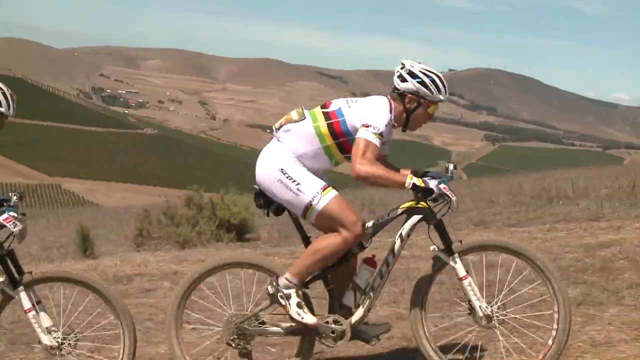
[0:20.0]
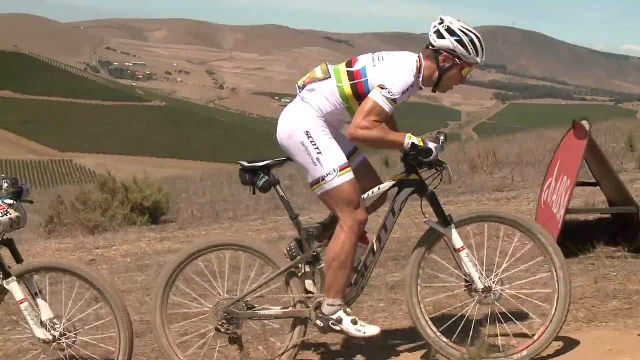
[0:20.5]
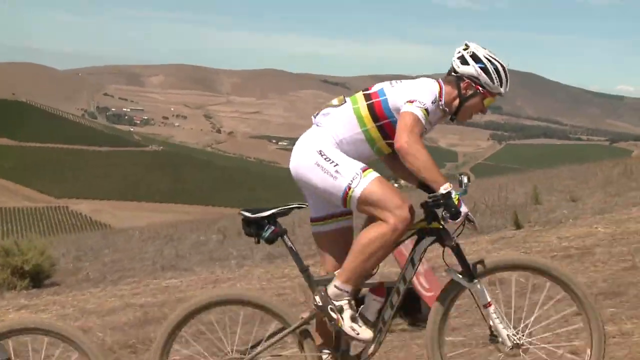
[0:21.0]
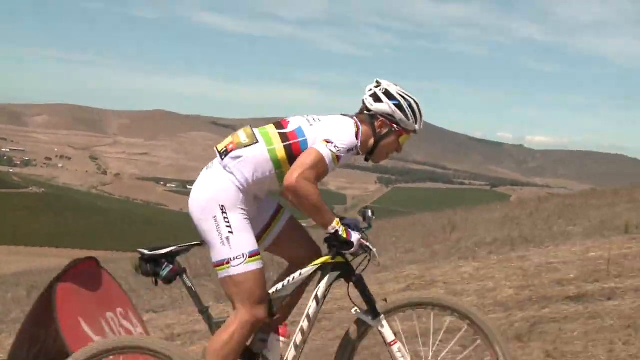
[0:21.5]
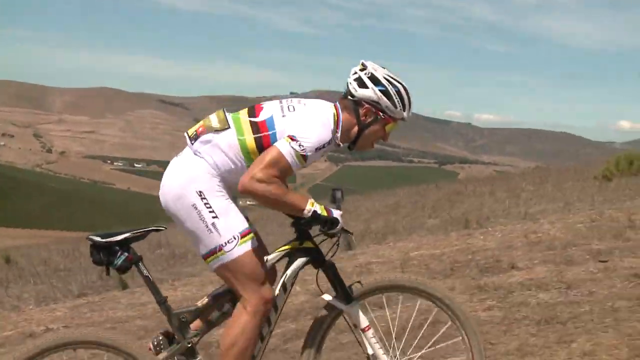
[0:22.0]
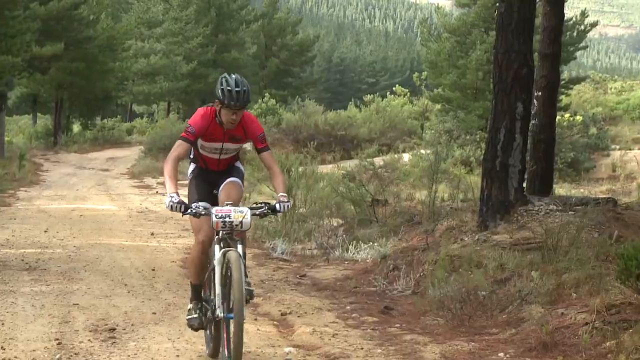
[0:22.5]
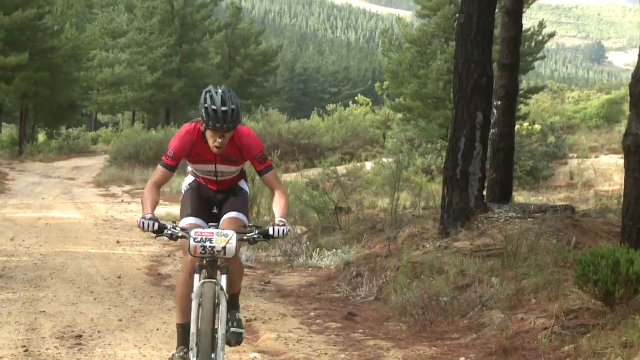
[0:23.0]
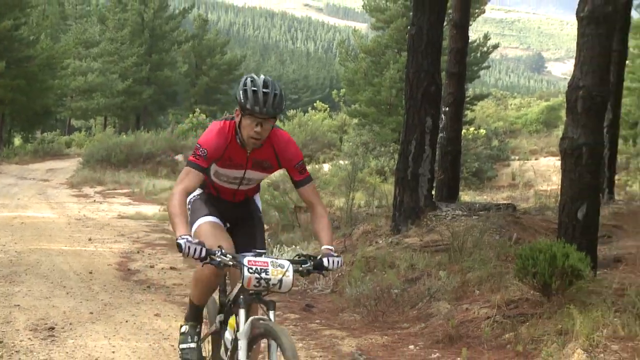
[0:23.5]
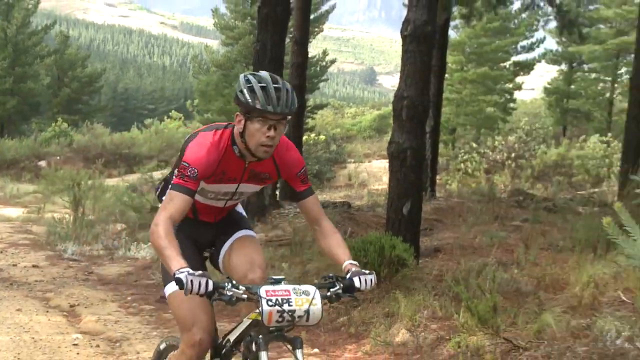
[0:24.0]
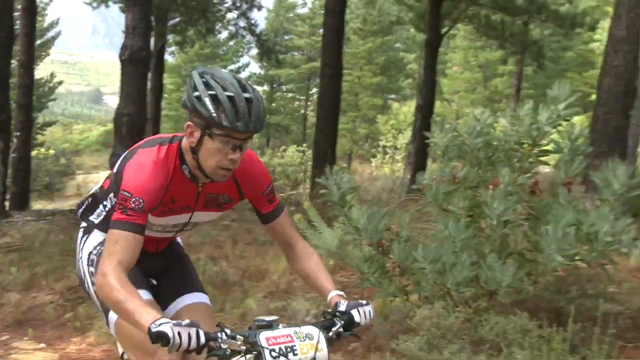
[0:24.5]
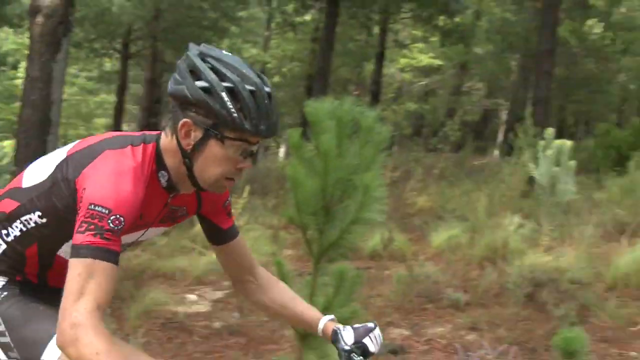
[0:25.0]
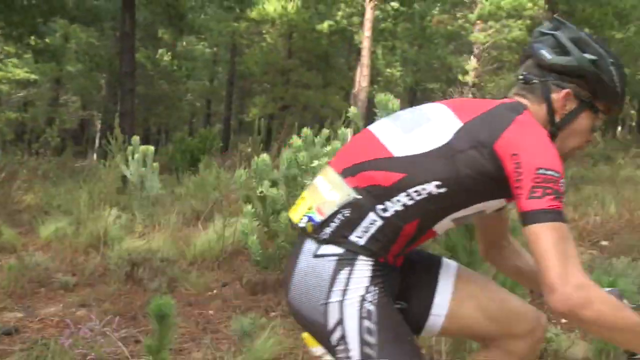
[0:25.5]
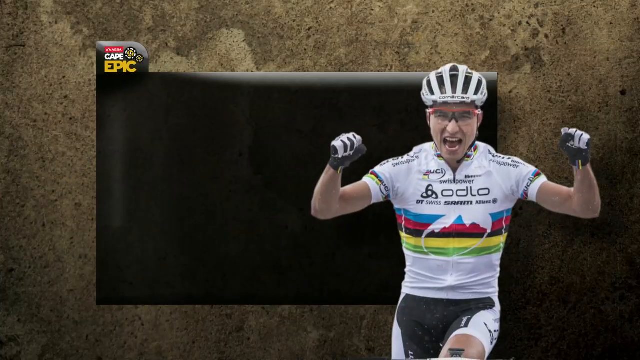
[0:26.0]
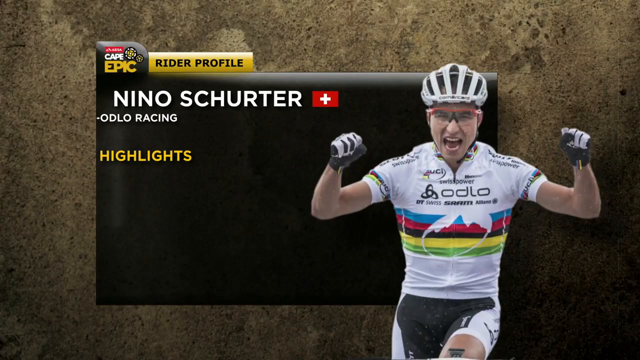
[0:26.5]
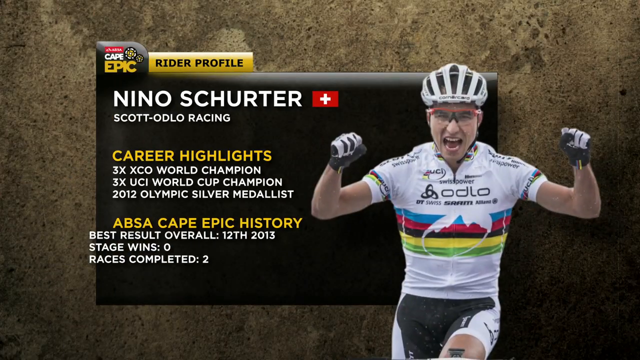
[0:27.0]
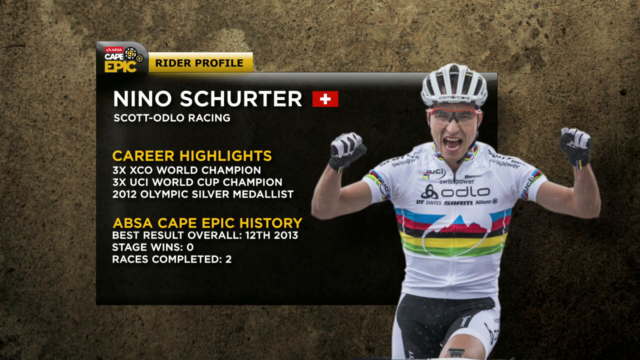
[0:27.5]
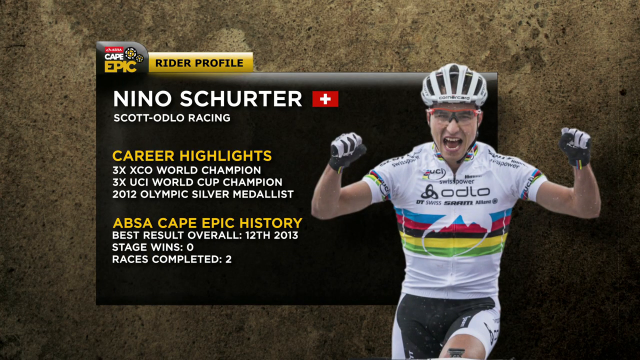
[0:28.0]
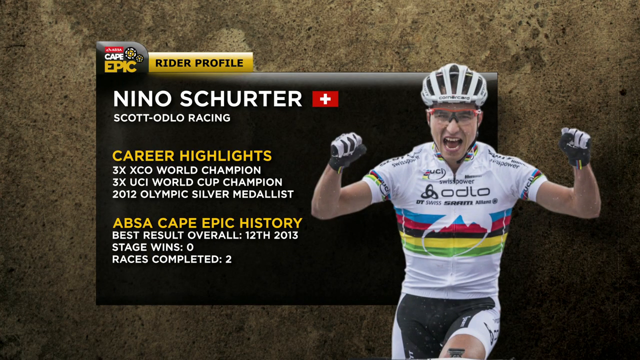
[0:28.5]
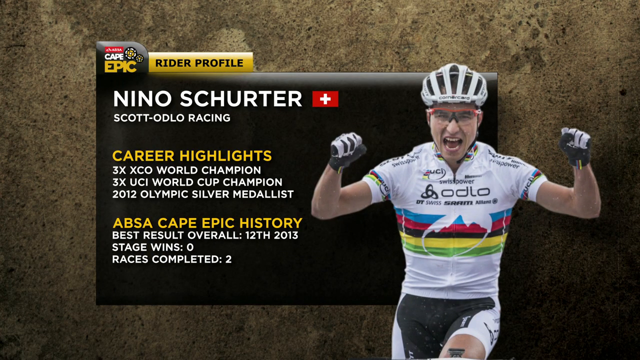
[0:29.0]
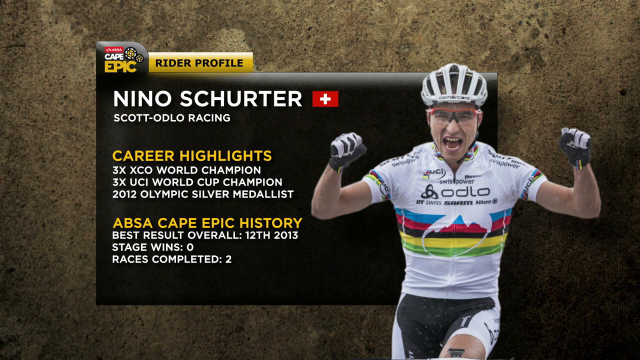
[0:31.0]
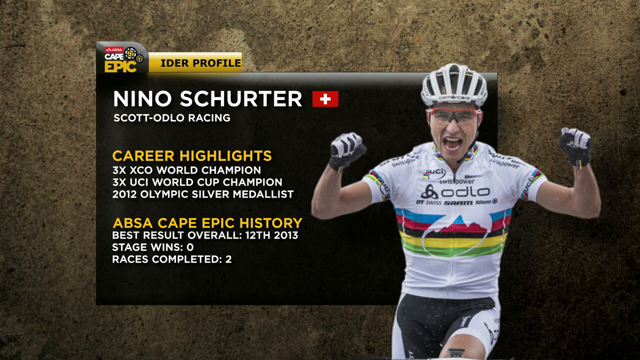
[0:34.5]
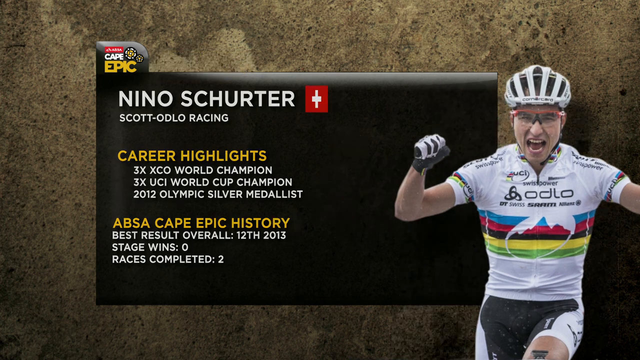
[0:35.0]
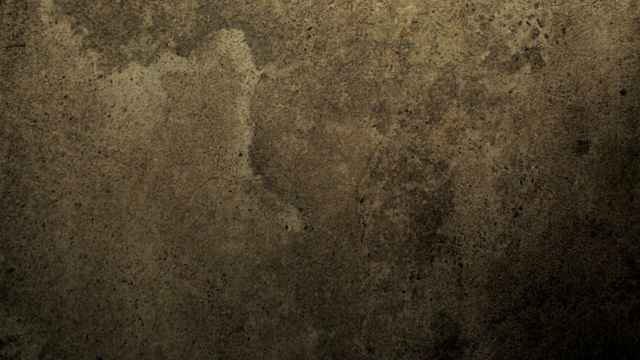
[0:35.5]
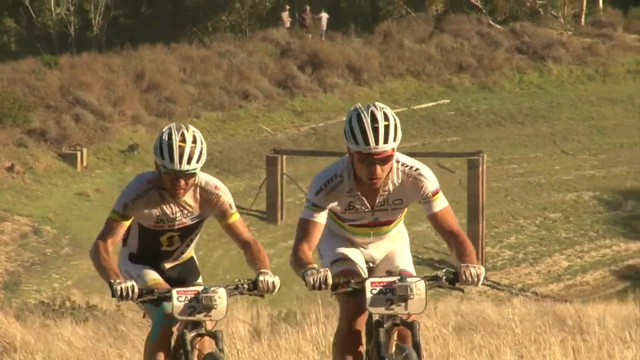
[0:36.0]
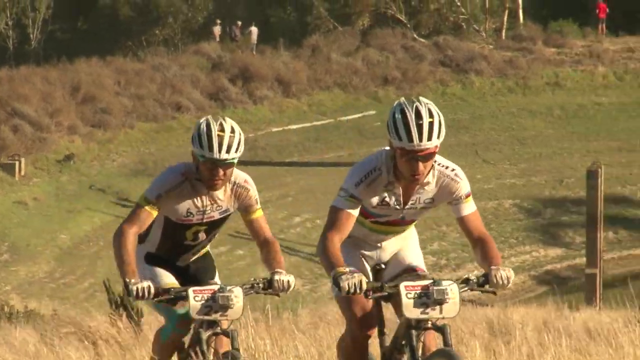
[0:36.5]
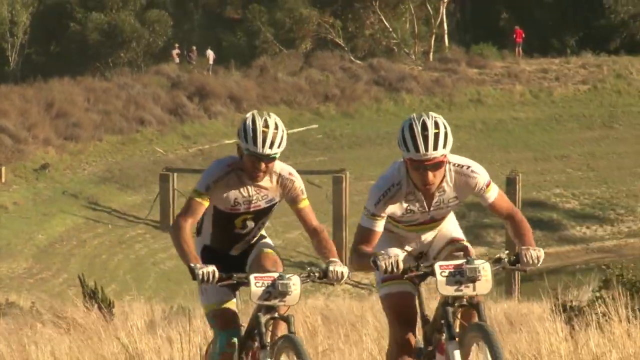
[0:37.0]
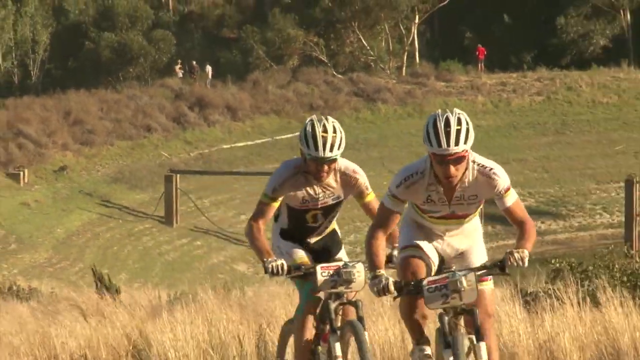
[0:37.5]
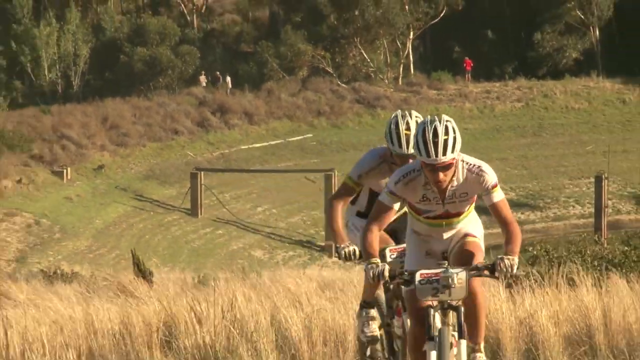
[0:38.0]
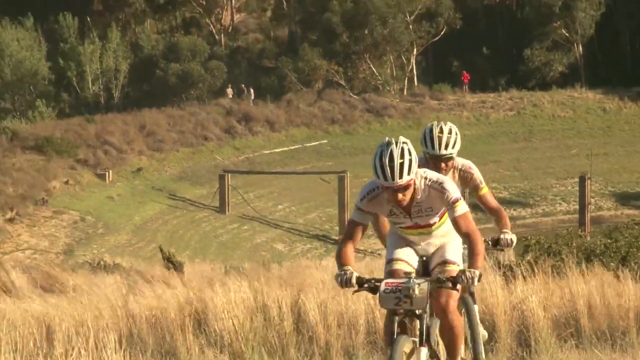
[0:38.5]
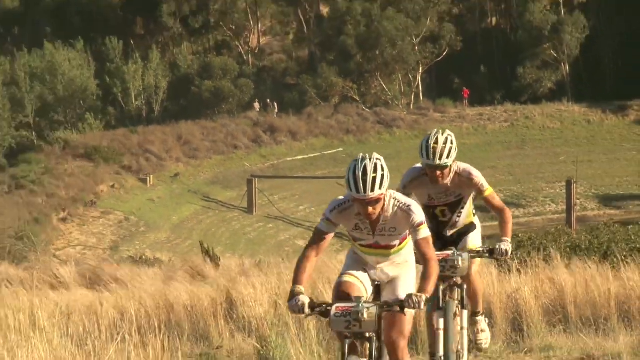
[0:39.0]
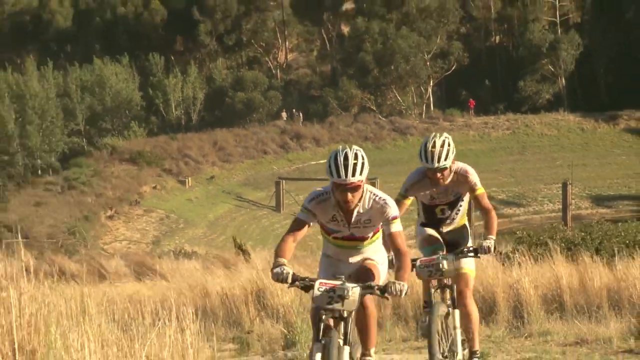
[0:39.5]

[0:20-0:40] Large, arid-looking hills fill the background, with some green crops or fields amid the dry dirt. In the foreground, a cyclist rides a white and black bike with red lettering on it. He wears white shorts and a white top with stripes in blue, red, black, yellow and green running along the center. He has a white helmet with black underneath and some kind of gold-looking shades or sunglasses, and he pumps his bike up a hill. The scene changes to another cyclist on a dirt path on the left side of the screen, with a hilly landscape covered in many evergreen-looking trees behind. This rider wears a red, white and black top, black shorts with white trim, gloves and a black helmet, and pedals up a hill. Next comes a graphic with text on the left and an image of a cyclist on the right who looks like he is cheering, with his mouth open and hands raised.